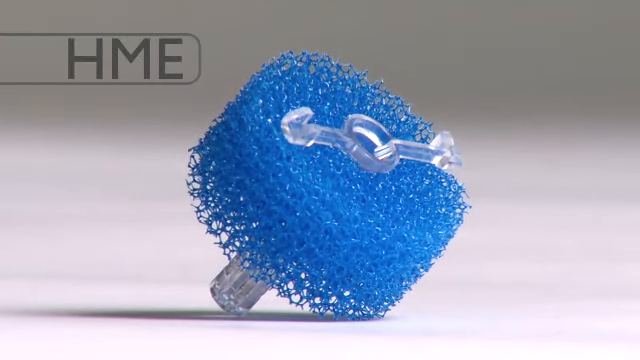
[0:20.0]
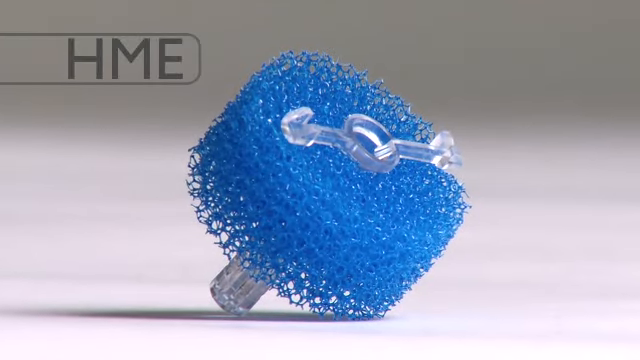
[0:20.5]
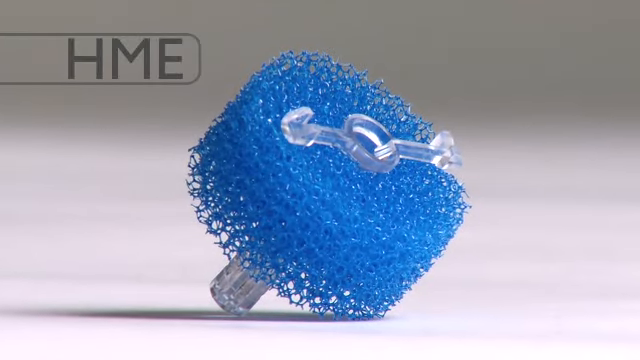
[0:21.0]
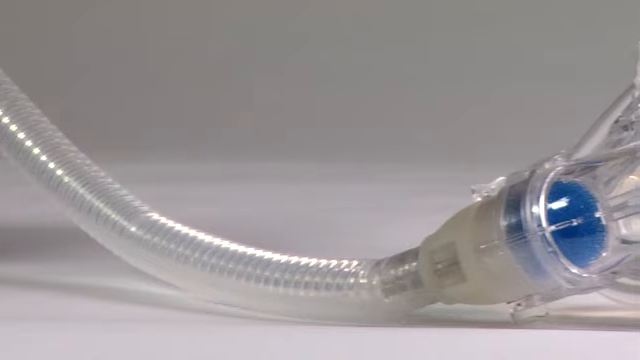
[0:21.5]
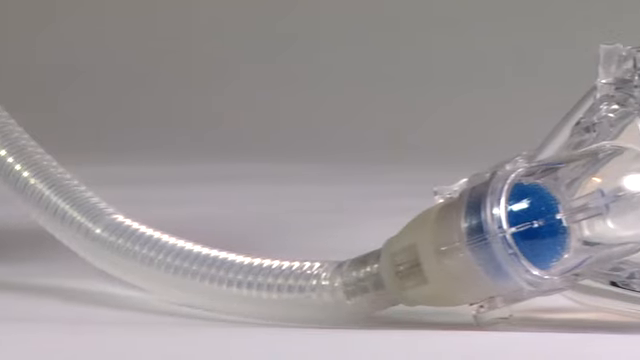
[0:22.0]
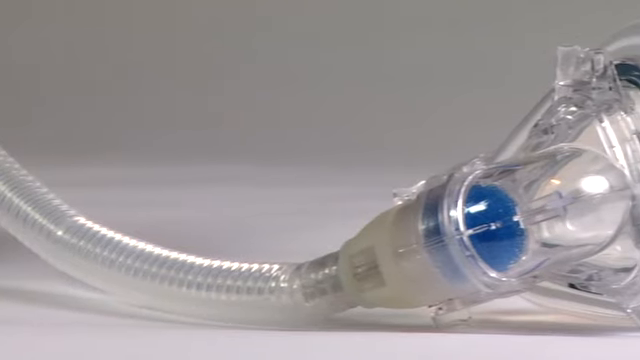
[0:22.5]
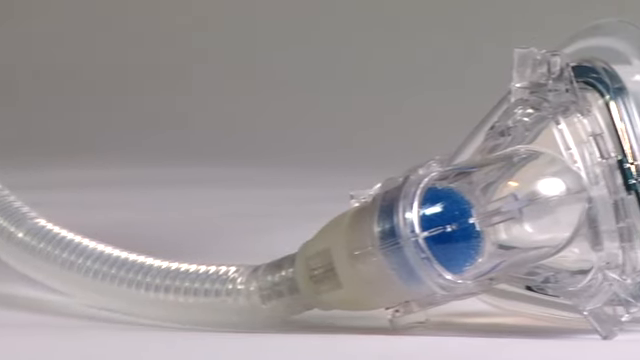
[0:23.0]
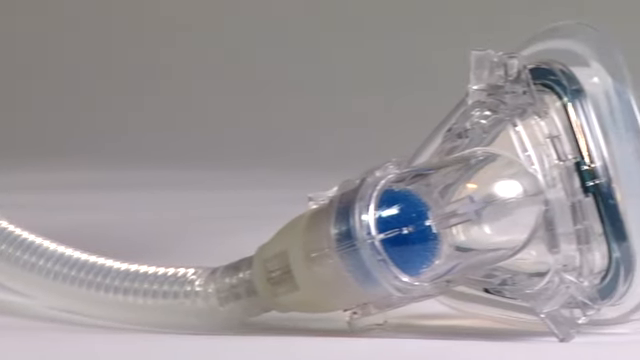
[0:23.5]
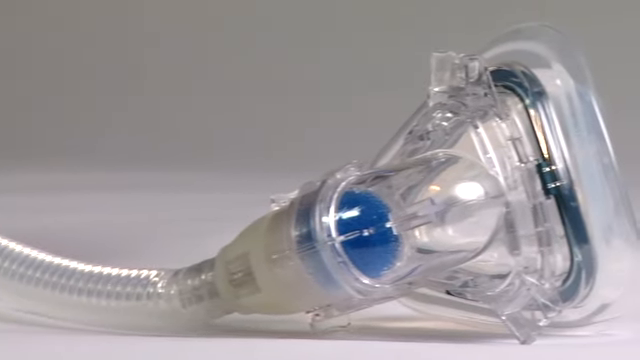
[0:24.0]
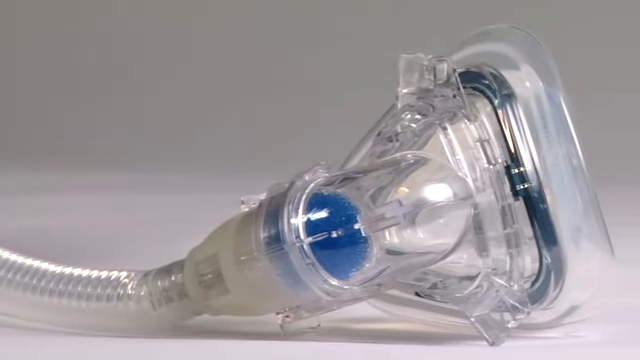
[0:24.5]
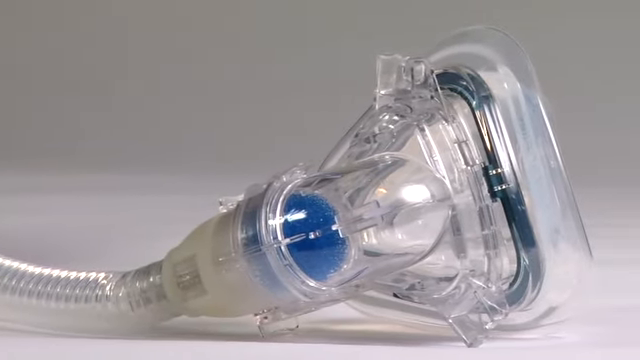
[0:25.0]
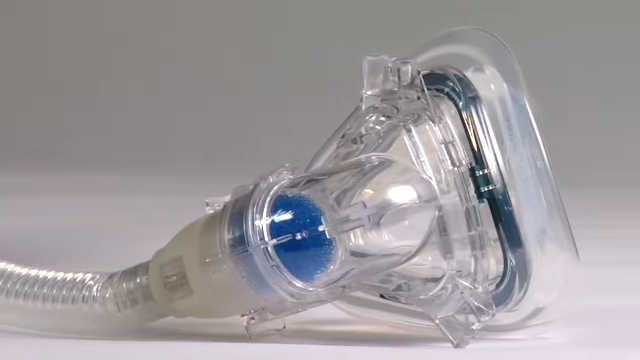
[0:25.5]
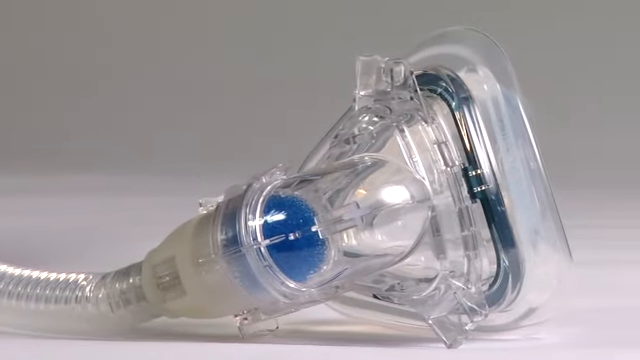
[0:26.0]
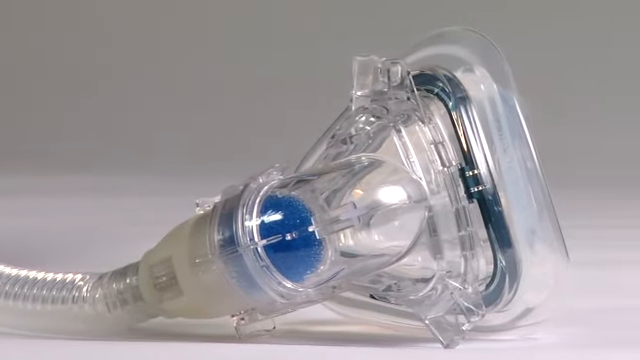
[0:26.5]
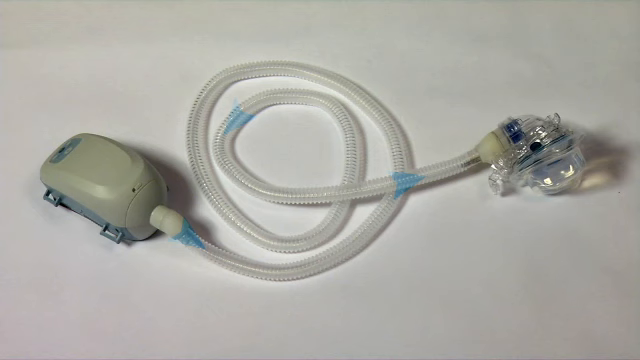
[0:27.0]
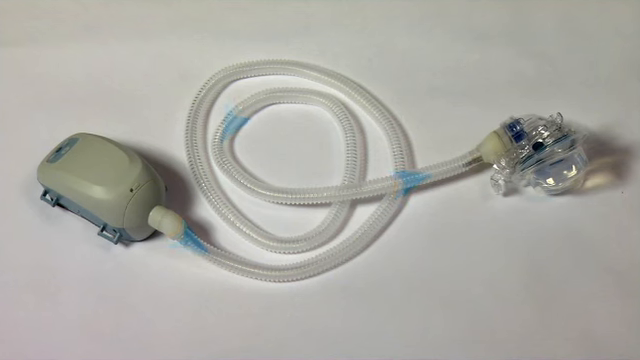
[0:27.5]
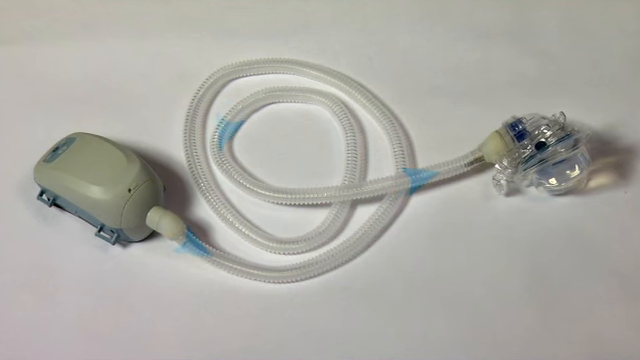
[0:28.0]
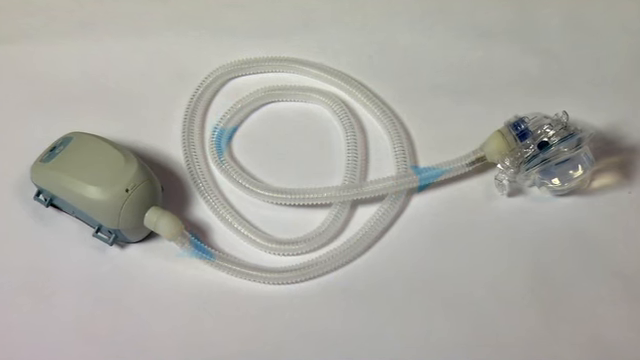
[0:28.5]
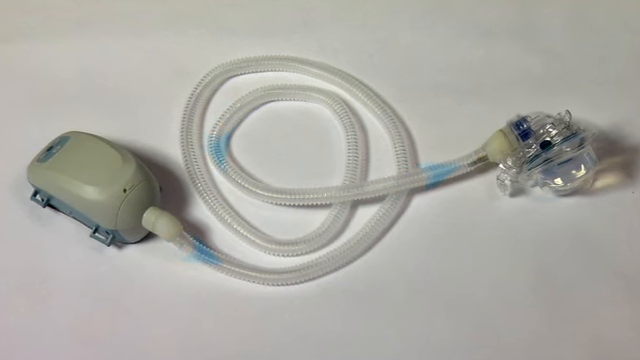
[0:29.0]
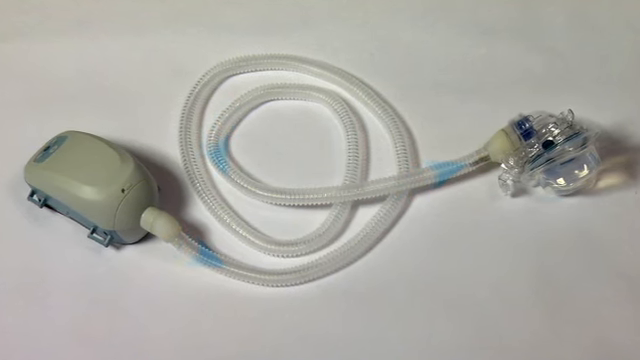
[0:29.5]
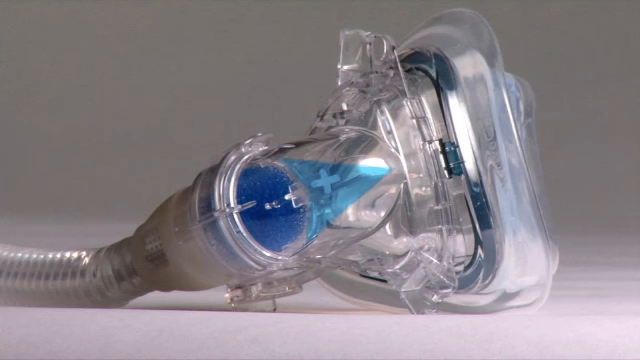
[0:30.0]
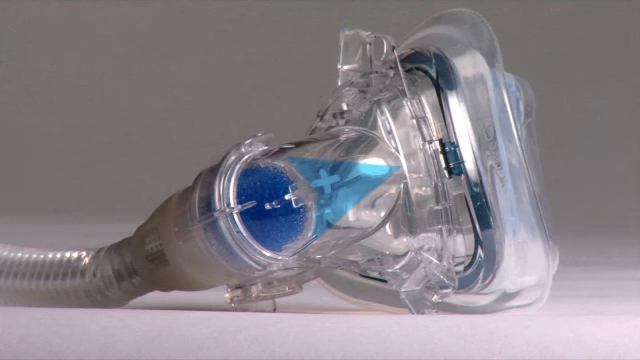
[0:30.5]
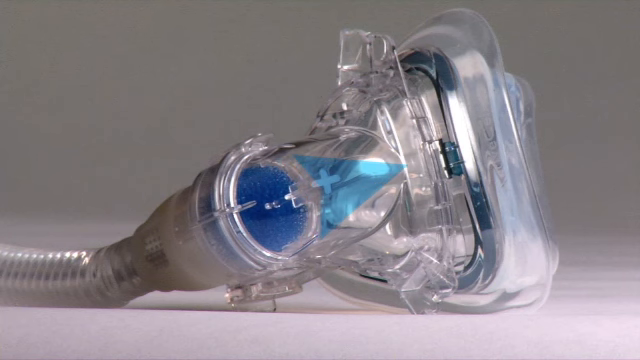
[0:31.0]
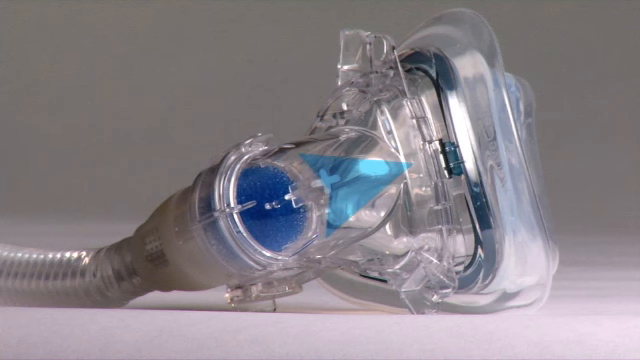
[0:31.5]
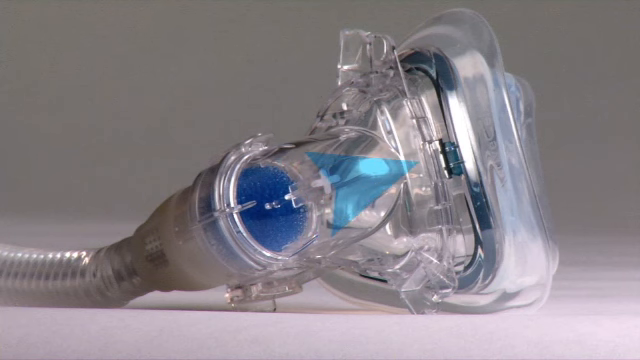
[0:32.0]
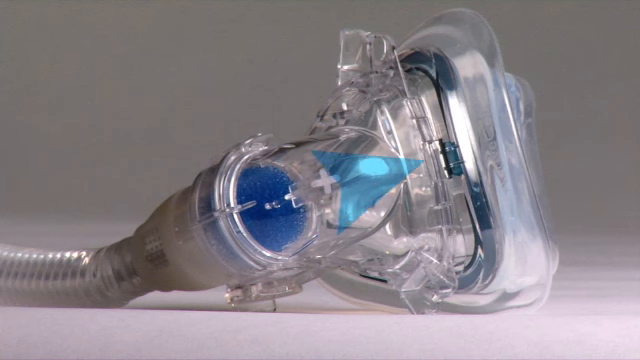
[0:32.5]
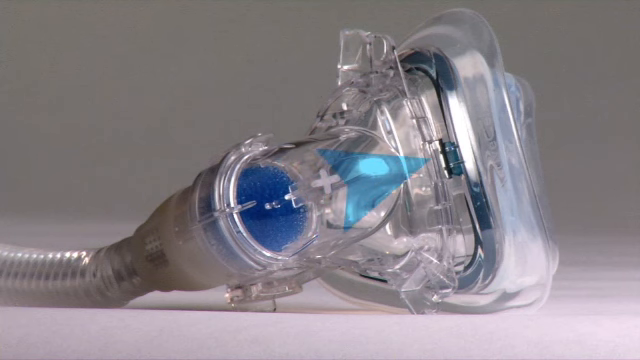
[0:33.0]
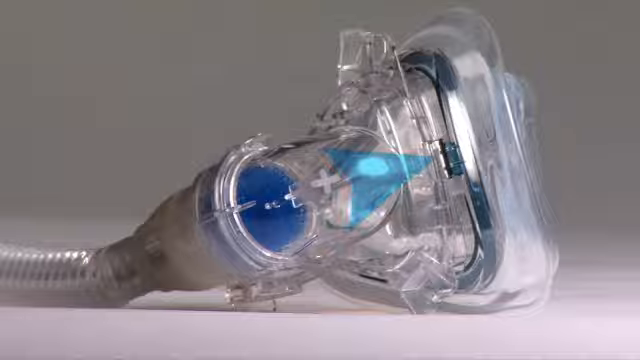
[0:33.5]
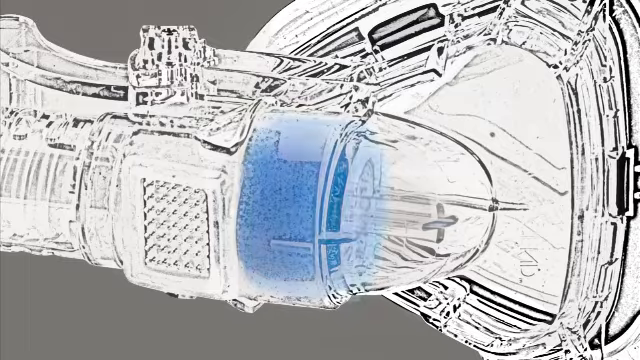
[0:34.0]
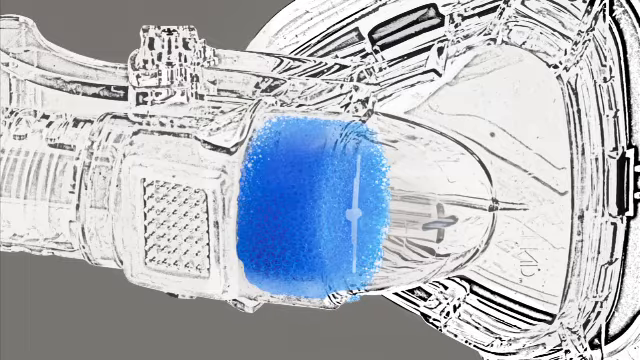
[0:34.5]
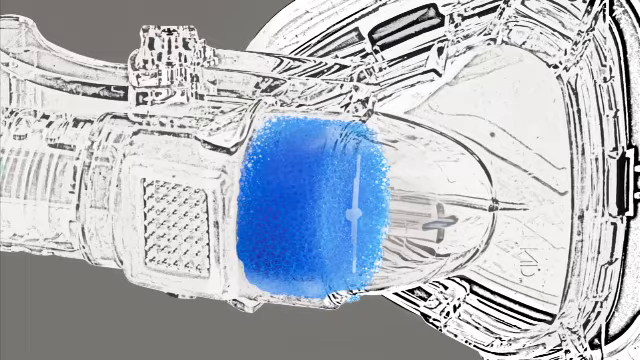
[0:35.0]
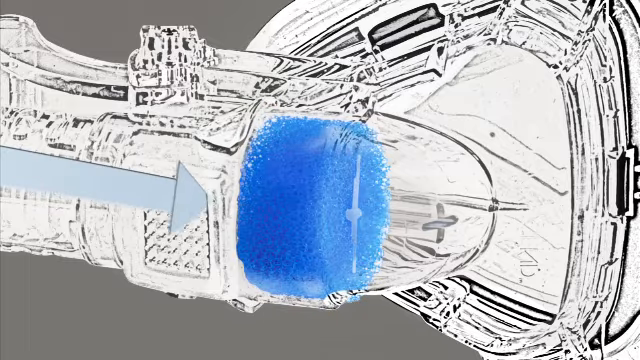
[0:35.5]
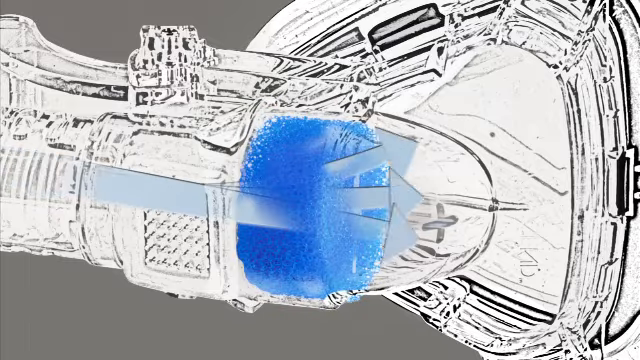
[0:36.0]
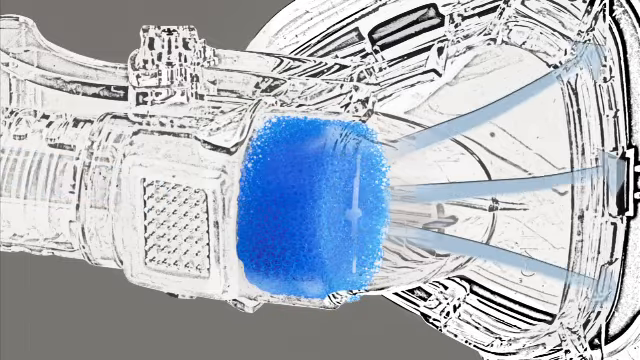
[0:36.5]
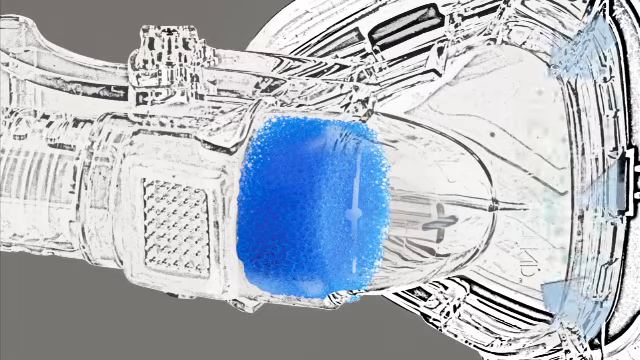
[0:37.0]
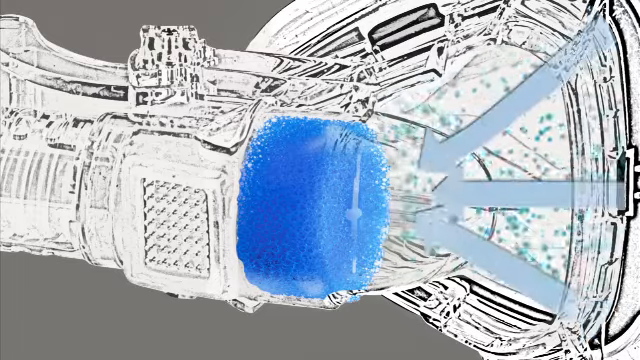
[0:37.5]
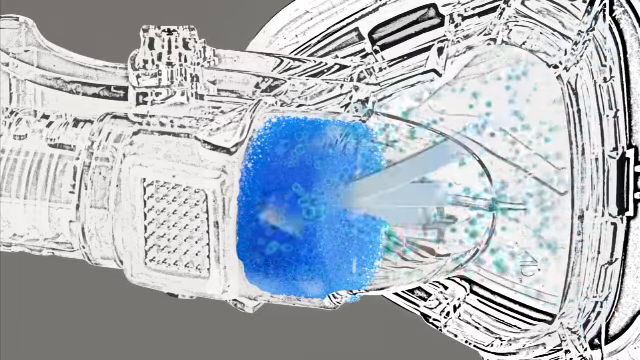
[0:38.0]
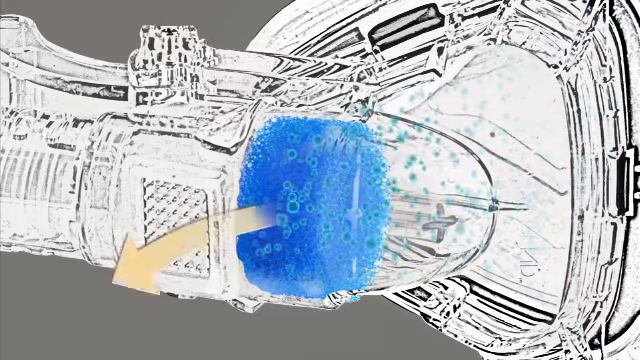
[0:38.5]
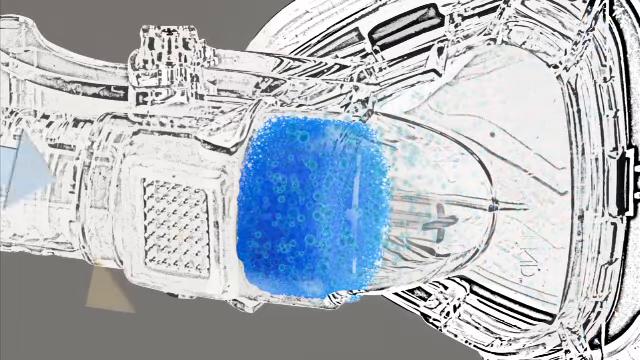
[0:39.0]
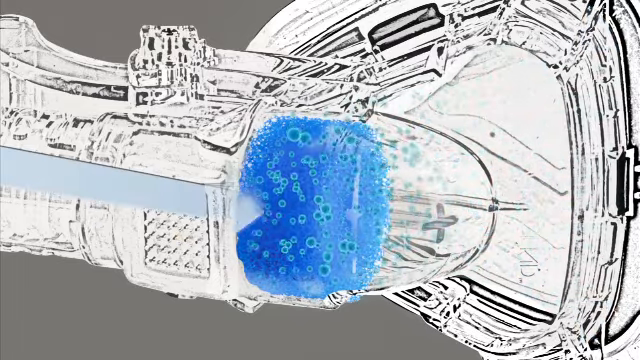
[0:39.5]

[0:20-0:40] A blue spongy filter made of plastic is attached to a clear plastic device. The filter goes inside the breathing apparatus that attaches to the sleep apnea device; the breathing apparatus is a guard that goes over the nose and mouth area. There are instructions on the device, and arrows point to the movement of air in and out of the device. The entire mechanism, including the sleep apnea machine and the breathing devices, is pictured on the screen, showing how they are attached and the size of the device. The letters "HME" appear in the upper left-hand corner of the screen in gray, bold, all-capital lettering. The breathing device that fits over the mouth and nose has a plus and a minus sign.